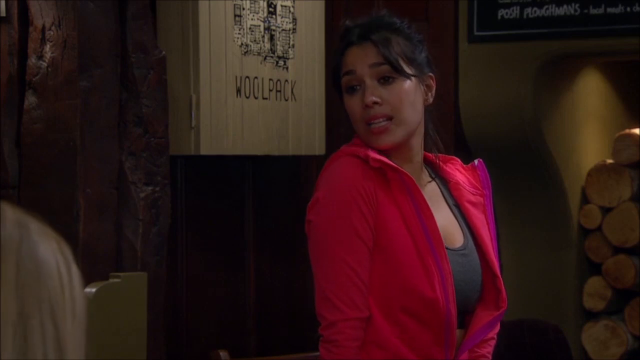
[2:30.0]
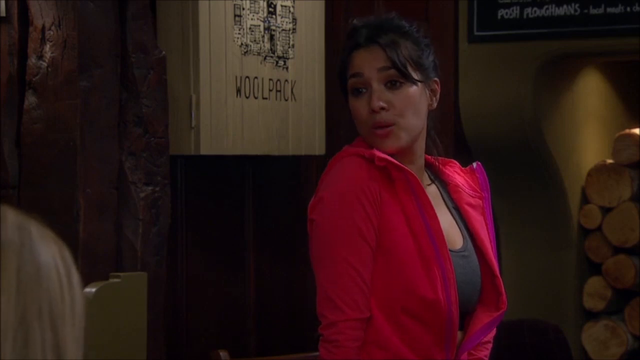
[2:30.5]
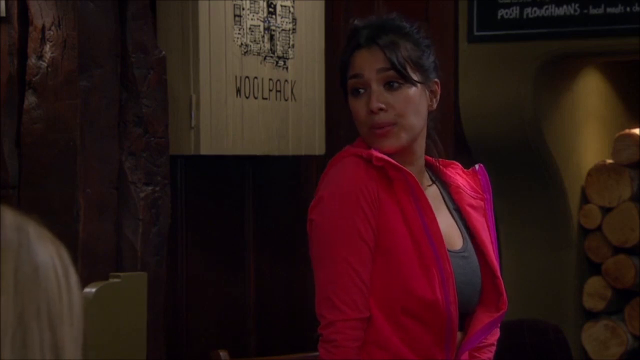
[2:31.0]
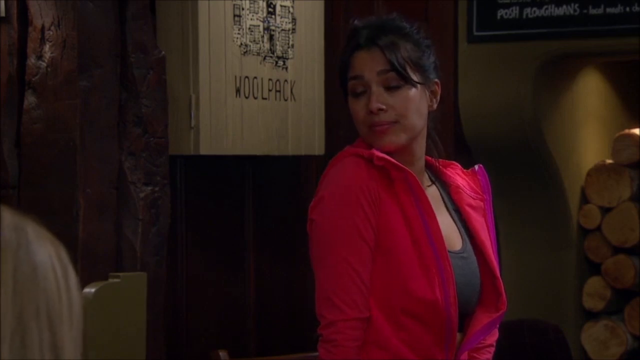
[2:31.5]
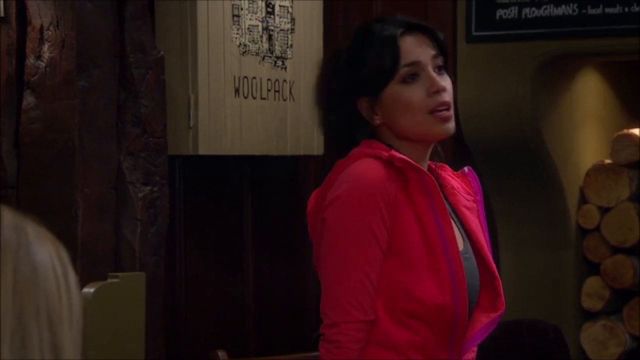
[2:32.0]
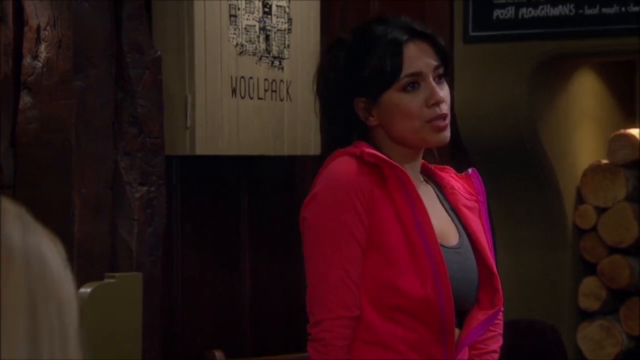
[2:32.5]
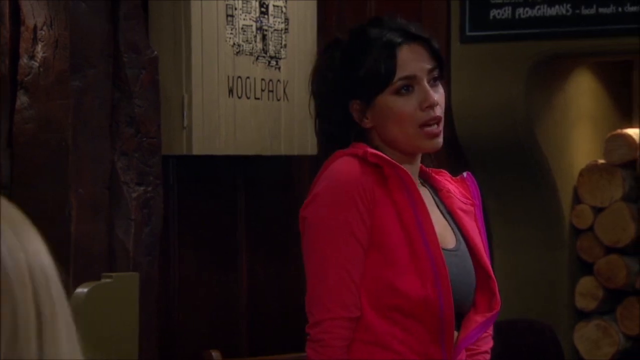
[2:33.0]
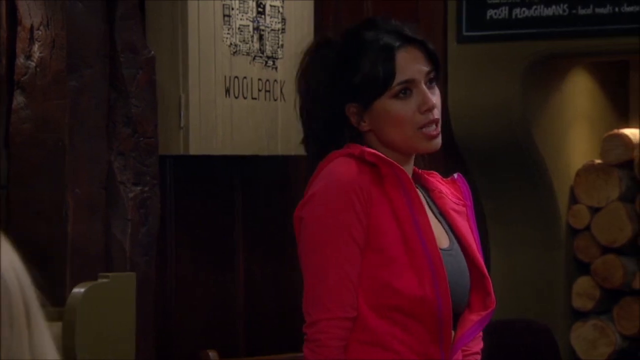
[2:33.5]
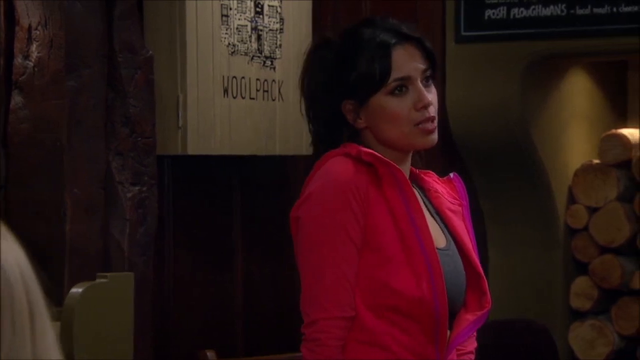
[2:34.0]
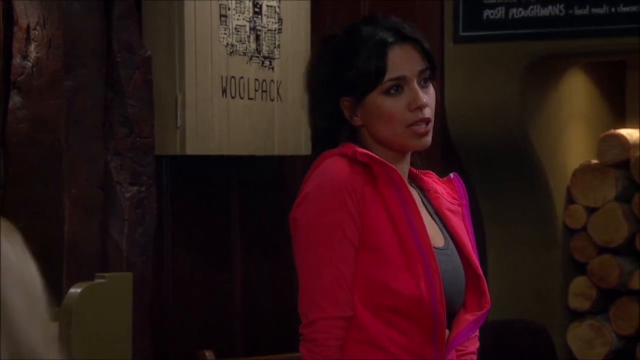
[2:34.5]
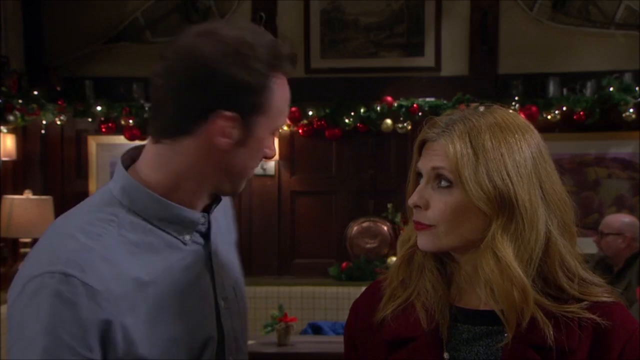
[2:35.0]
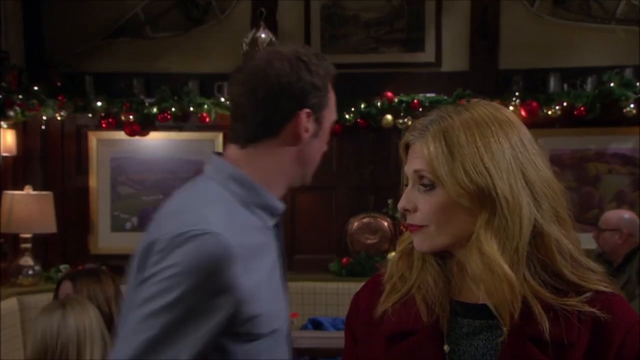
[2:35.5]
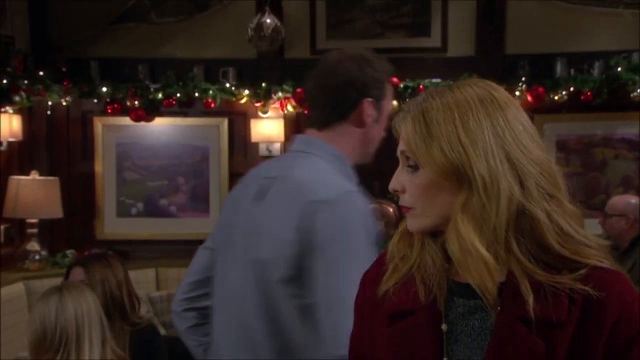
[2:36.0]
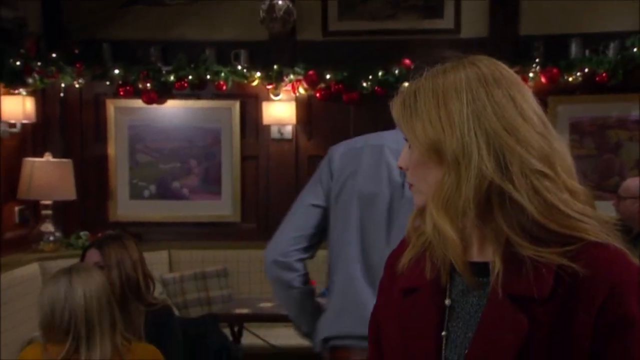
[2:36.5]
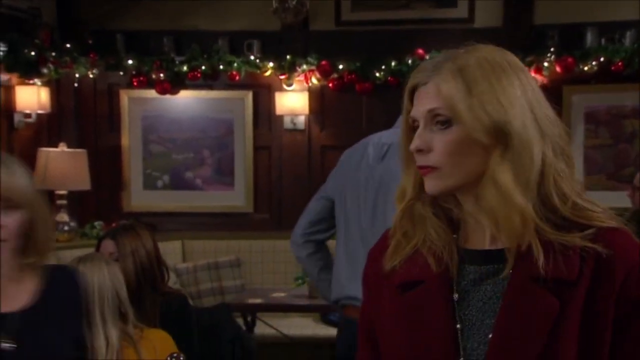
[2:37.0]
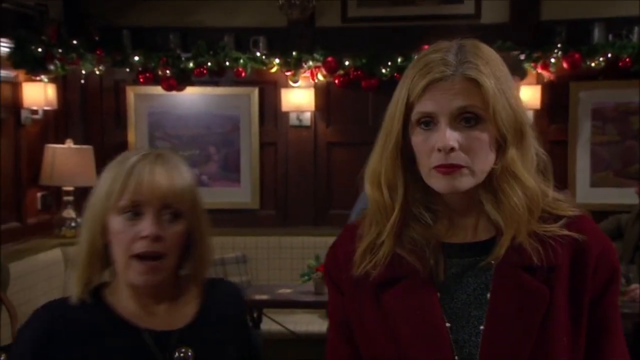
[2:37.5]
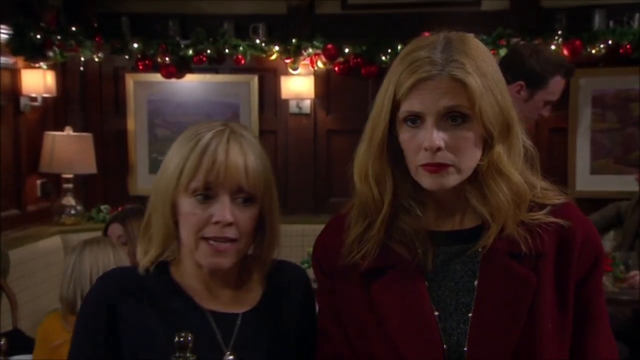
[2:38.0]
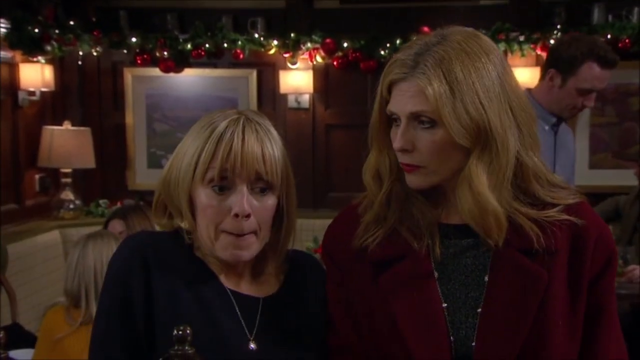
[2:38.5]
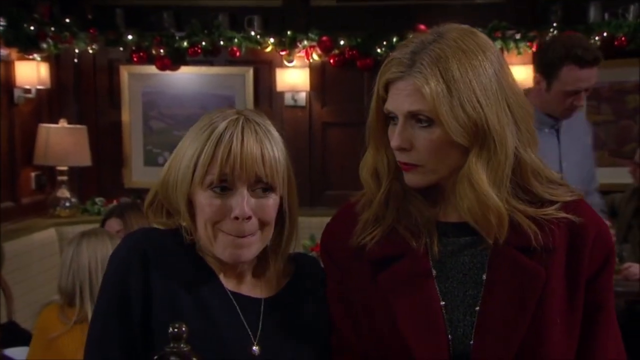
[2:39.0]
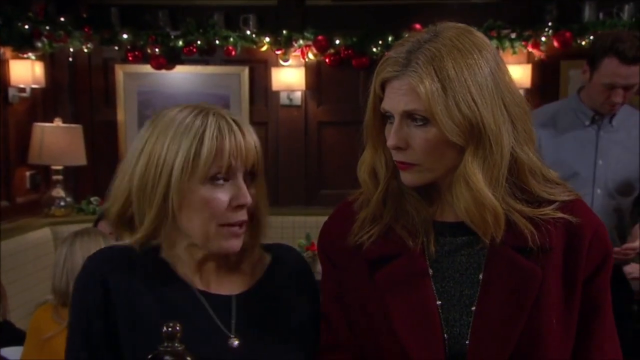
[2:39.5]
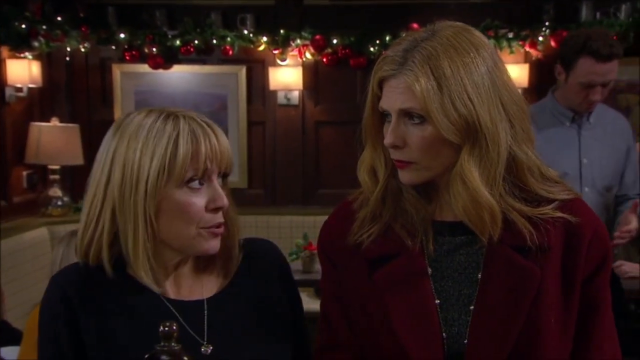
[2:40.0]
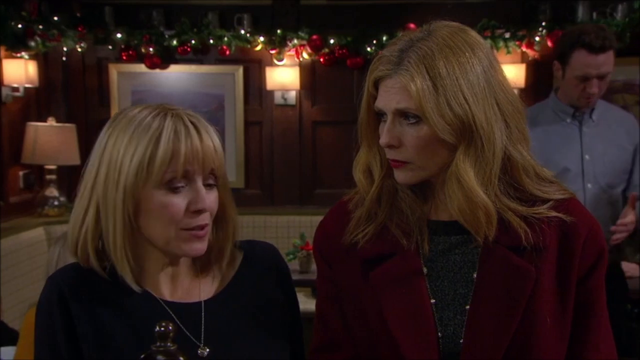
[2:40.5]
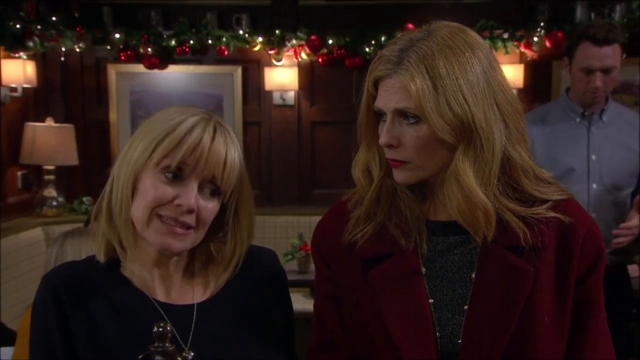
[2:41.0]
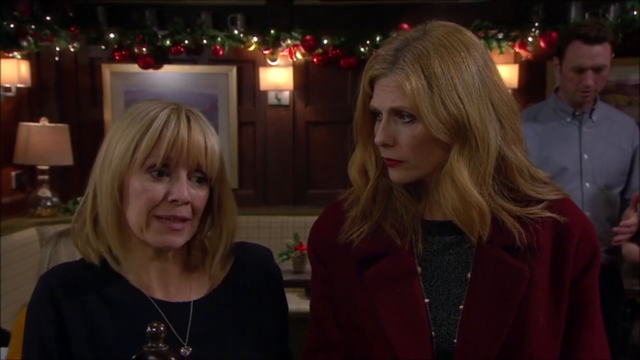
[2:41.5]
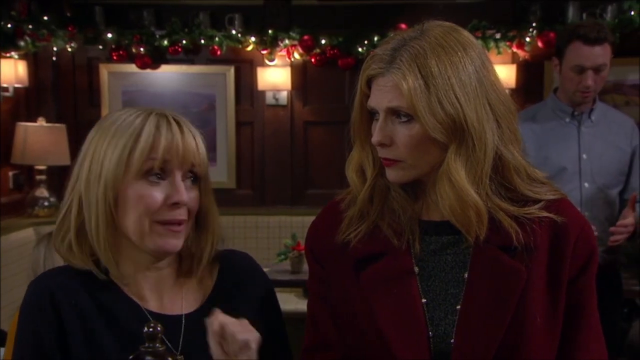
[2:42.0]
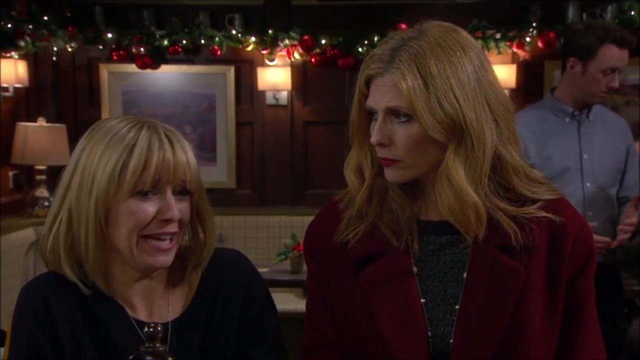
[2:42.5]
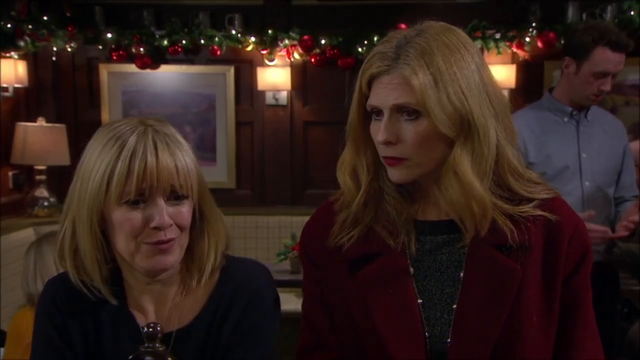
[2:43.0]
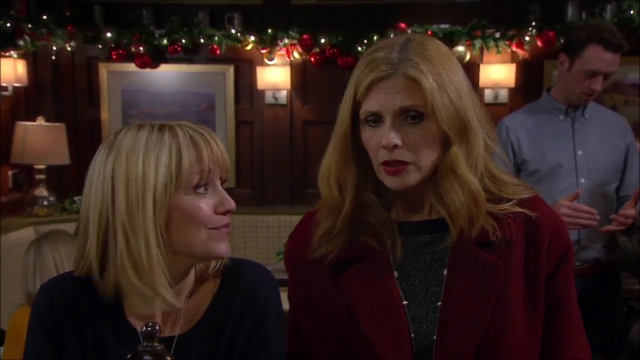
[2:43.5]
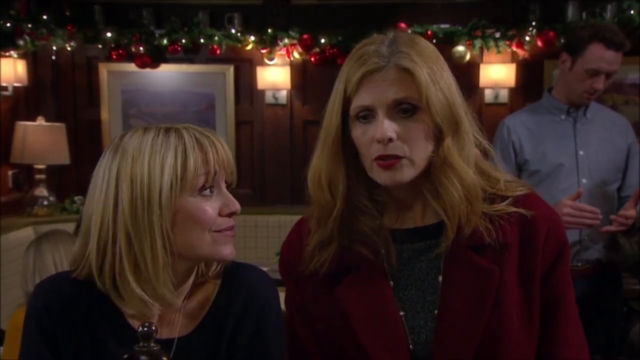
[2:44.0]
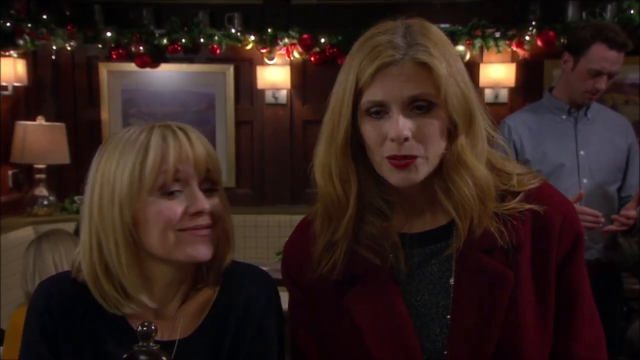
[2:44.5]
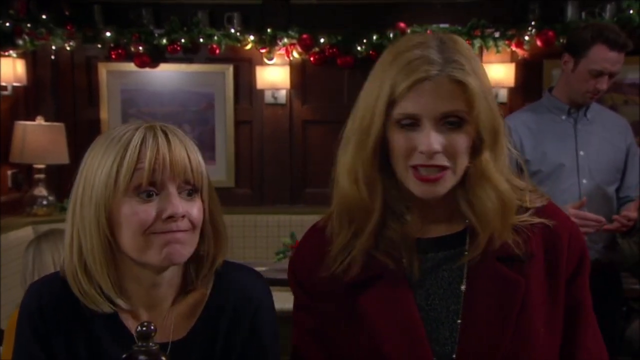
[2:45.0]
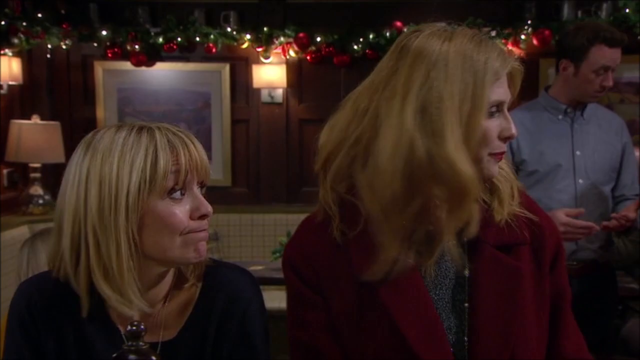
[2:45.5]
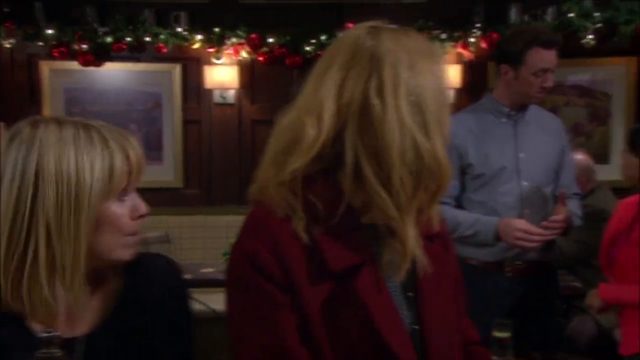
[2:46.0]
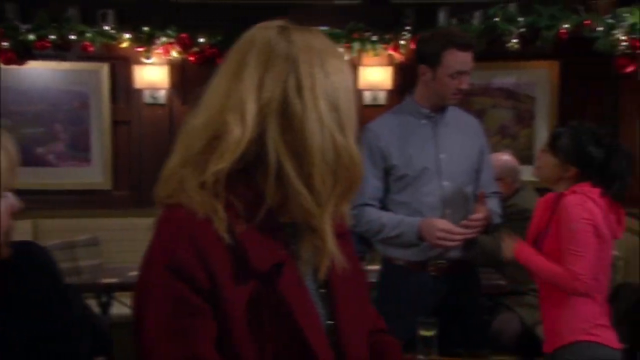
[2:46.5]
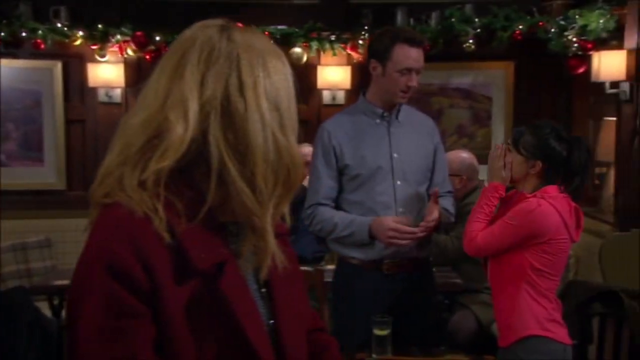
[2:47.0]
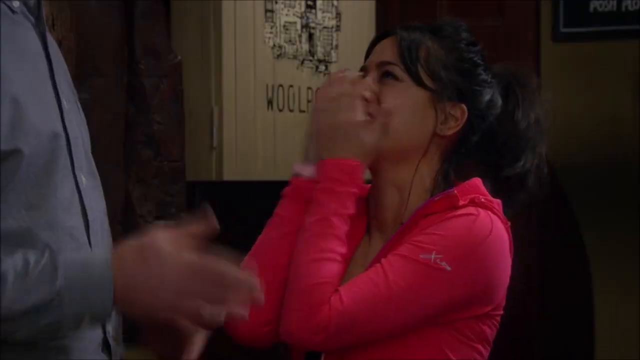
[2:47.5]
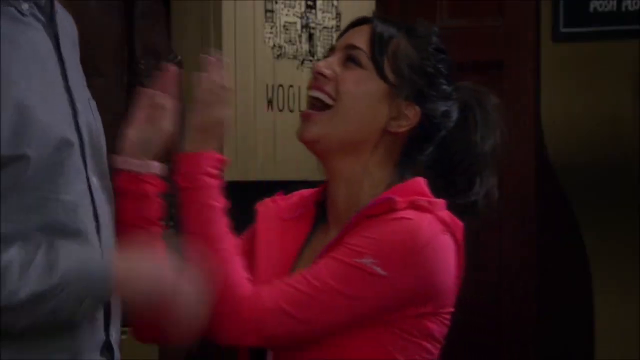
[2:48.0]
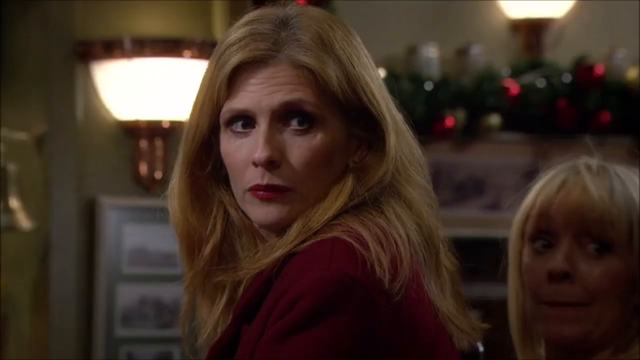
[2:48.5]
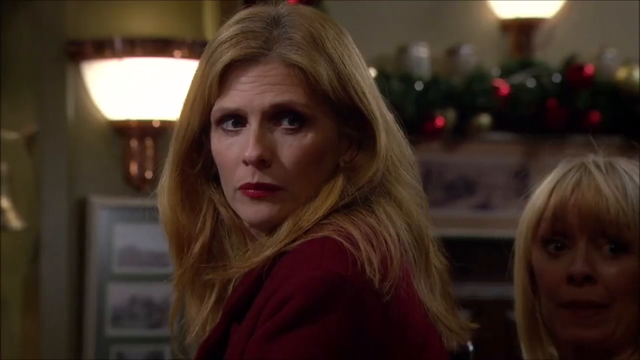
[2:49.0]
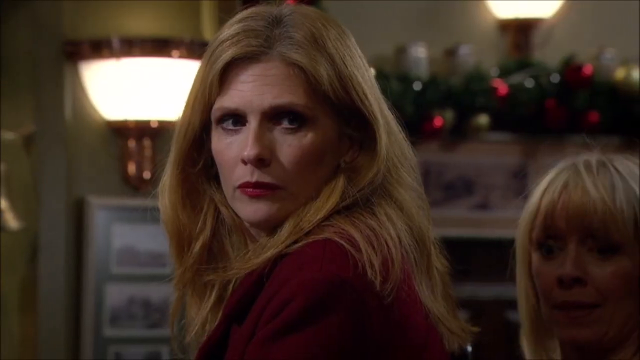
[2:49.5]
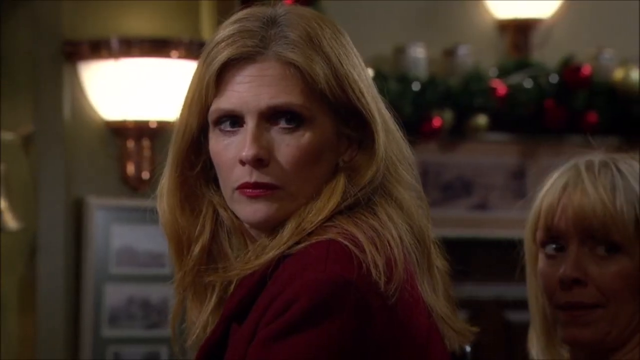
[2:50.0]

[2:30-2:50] The injured woman, in a red workout jacket with a workout top and her hair in a ponytail, acts as if she doesn't care what the others say and looks at the man. The man talks to his lady friend, then walks away to talk to the injured woman, and the blonde lady friend in the red jacket, black top and a necklace is not happy about it. A friend from the table who was making snarky comments to the injured woman comes over; she has a short blonde bob and a black shirt, and she seems to be warning the blonde lady. The blonde lady, unhappy, turns around to see her man talking to the injured woman, who is laughing, touching and being flirtatious in front of the bar. The blonde lady glares at her.